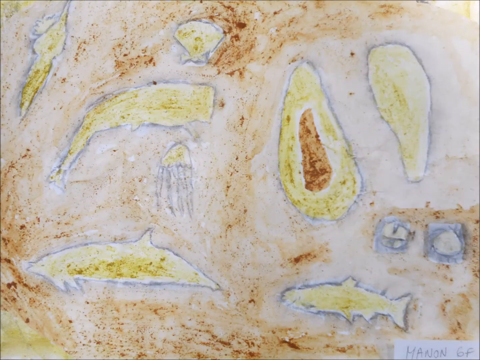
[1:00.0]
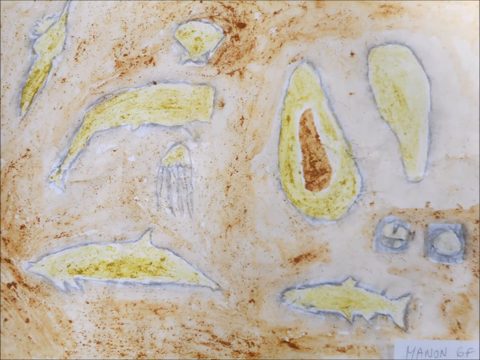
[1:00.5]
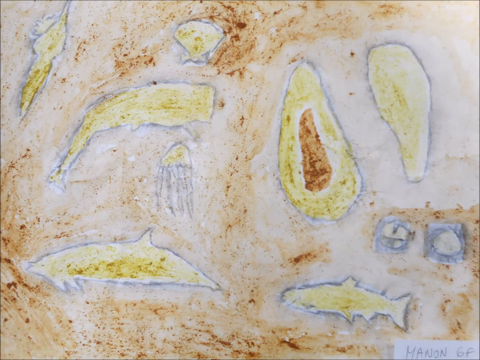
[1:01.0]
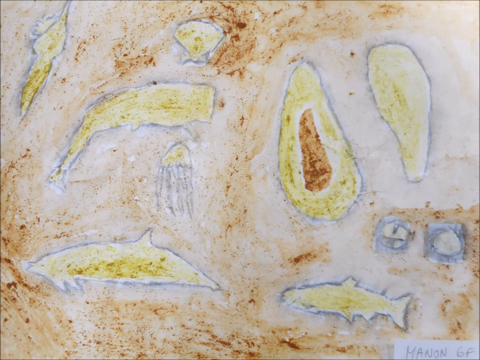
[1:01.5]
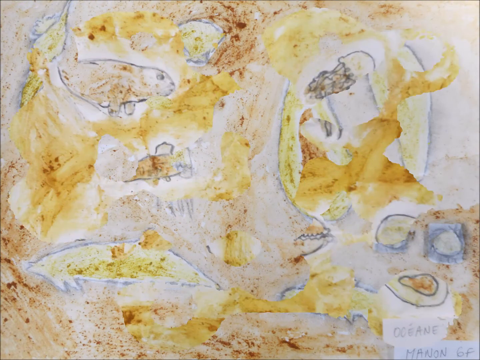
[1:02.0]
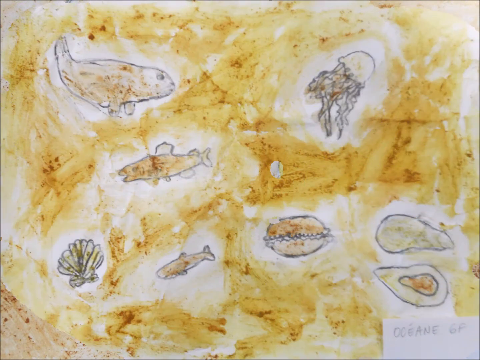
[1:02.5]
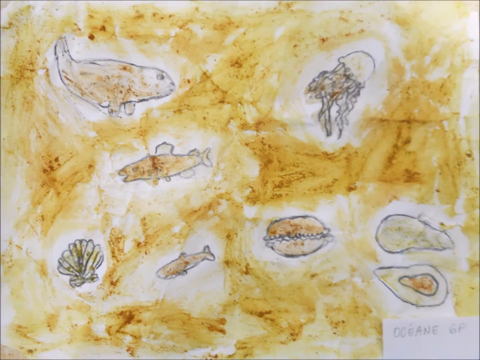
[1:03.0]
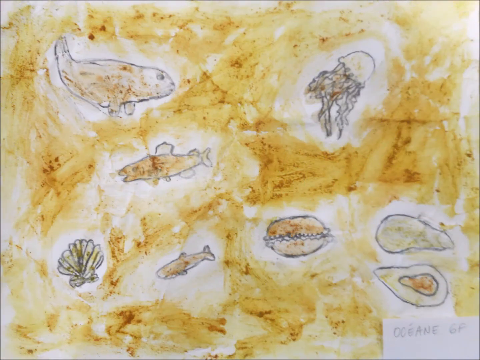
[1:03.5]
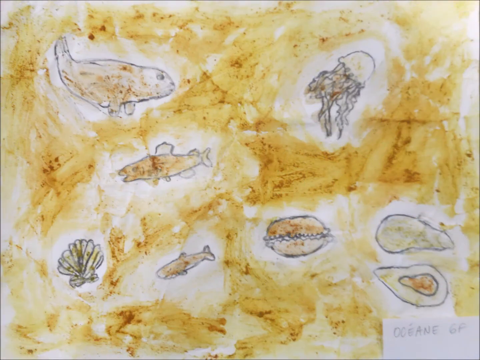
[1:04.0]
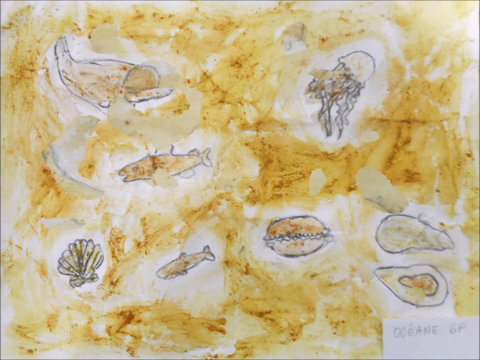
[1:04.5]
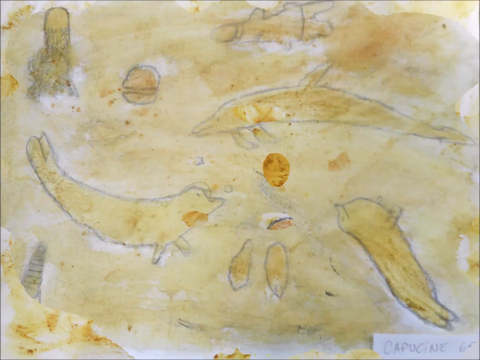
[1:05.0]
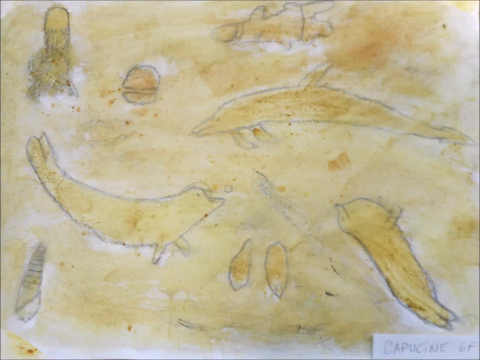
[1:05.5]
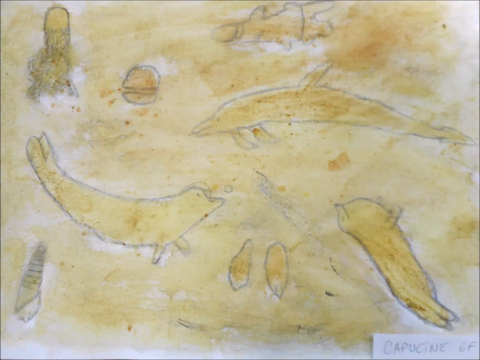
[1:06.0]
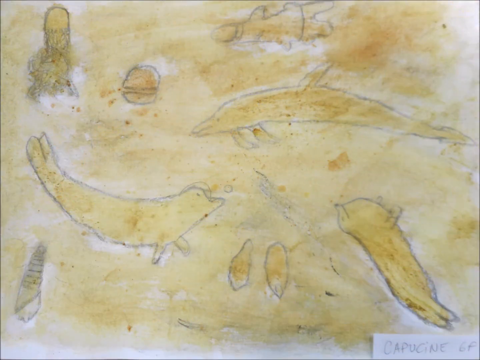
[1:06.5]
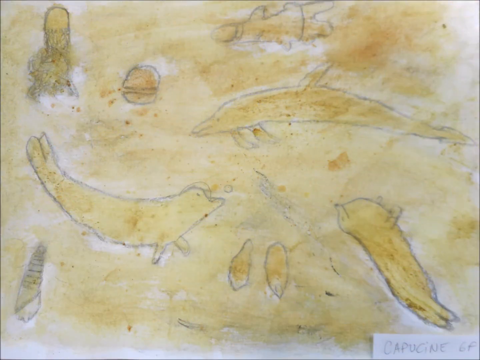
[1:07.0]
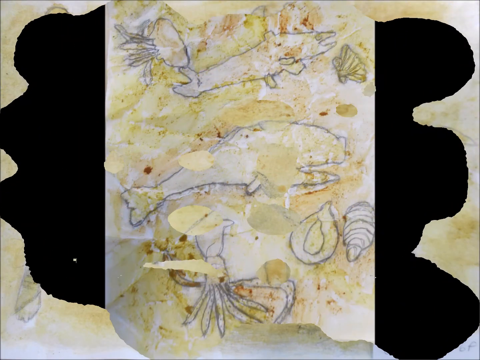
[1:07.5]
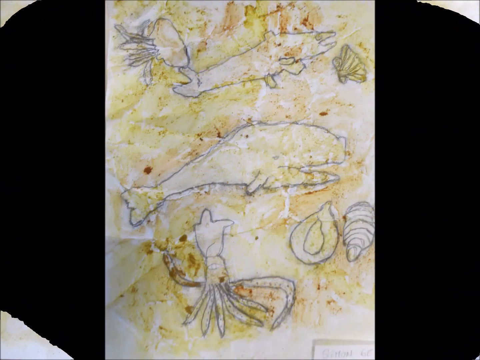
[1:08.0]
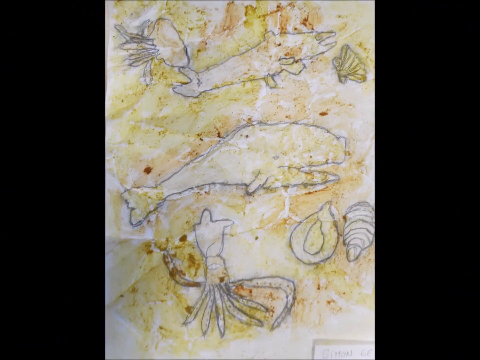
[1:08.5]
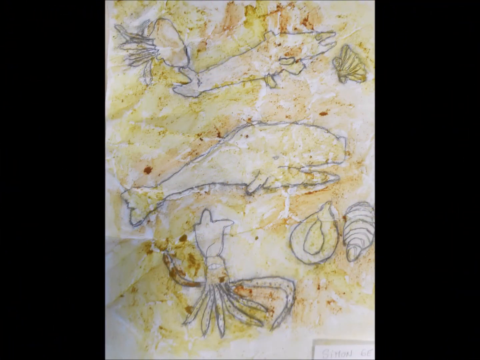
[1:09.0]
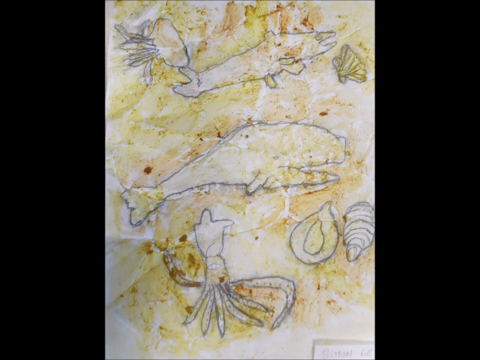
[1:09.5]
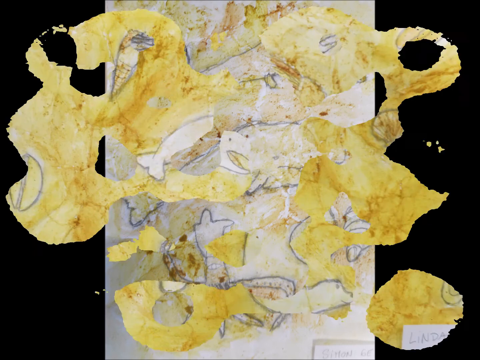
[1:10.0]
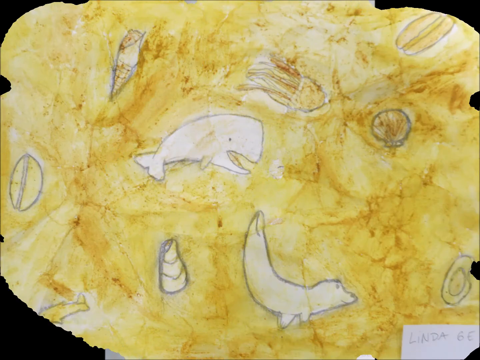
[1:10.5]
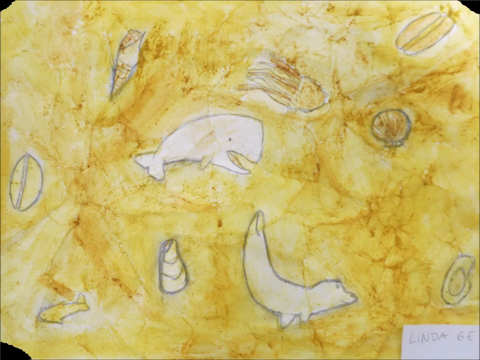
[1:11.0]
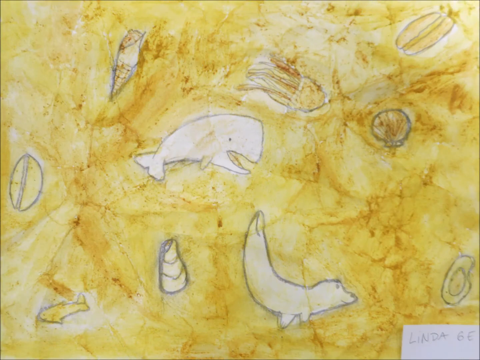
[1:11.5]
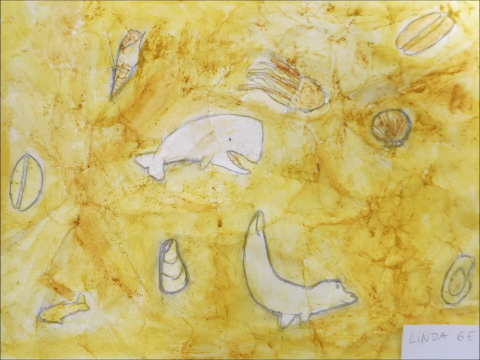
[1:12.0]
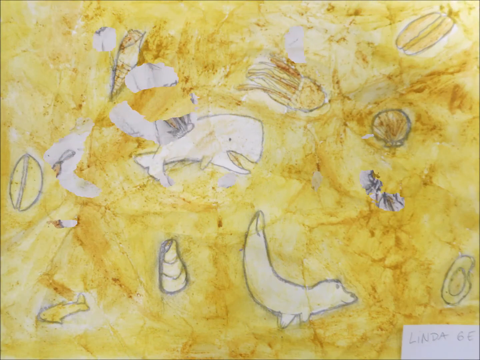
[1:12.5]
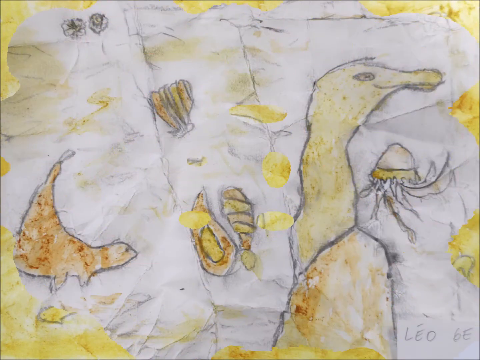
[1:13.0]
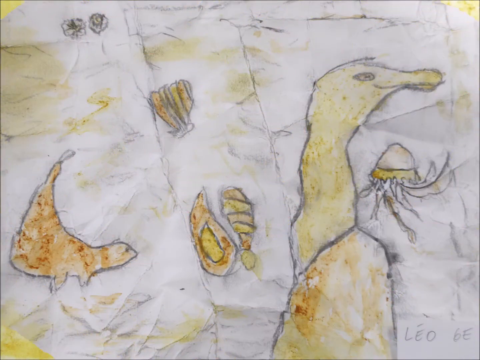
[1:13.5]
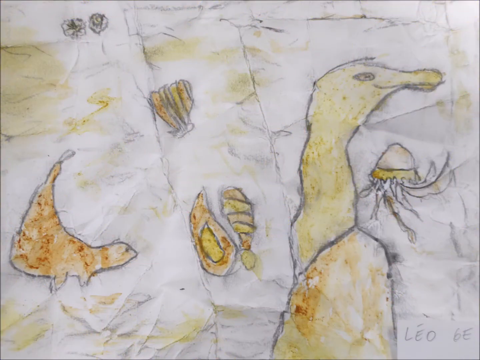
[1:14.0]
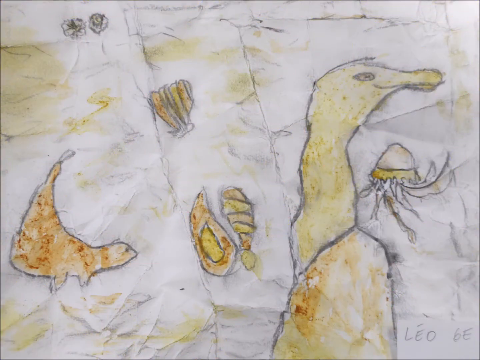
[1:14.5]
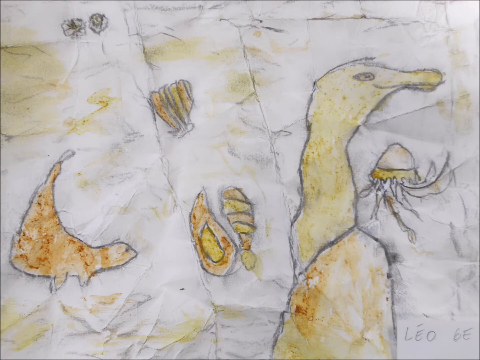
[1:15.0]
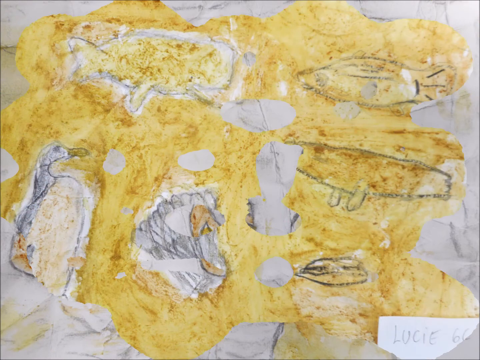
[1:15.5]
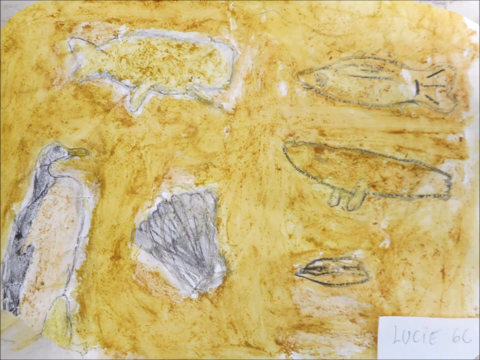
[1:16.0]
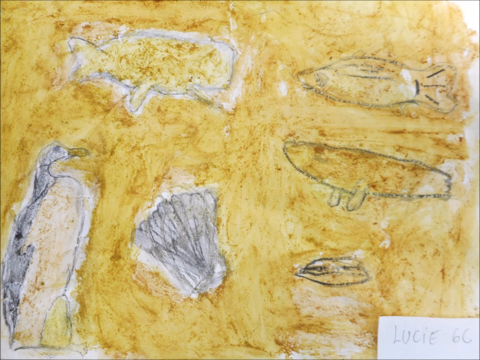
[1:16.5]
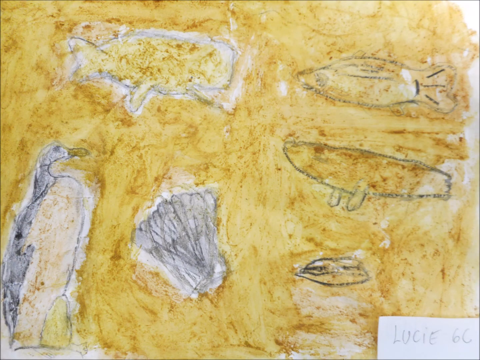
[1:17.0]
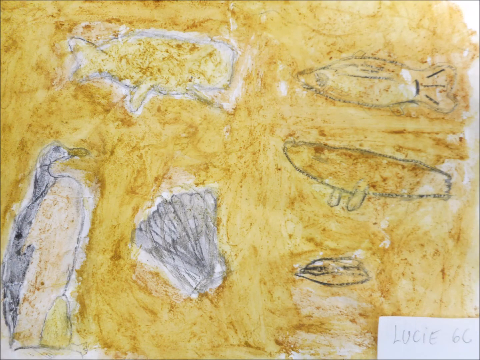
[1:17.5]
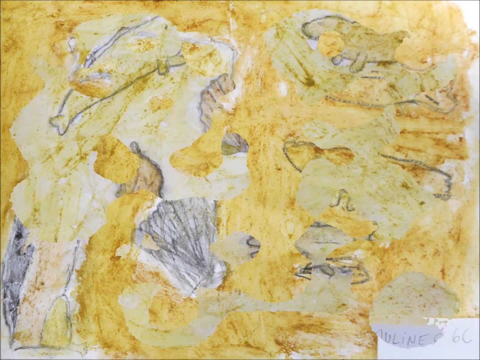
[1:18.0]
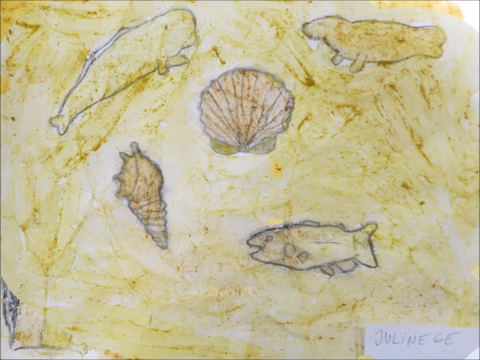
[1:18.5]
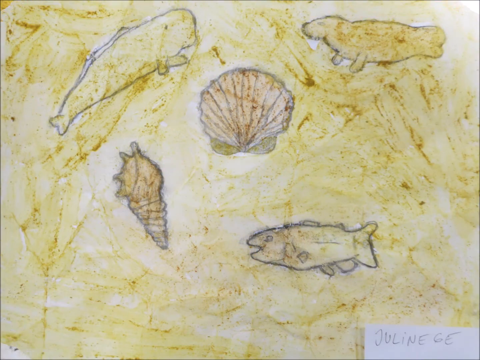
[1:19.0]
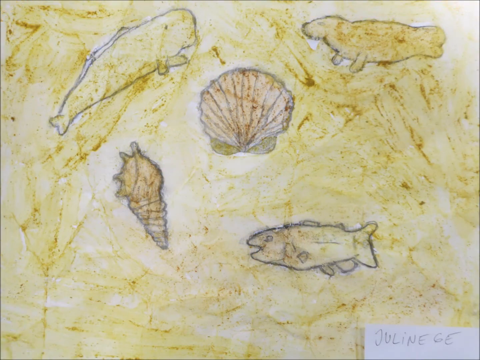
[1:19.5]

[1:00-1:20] Children's drawings of marine life, drawn in pencil and colored in yellow and brown, continue. One shows a whale, a starfish, a squid, an oyster, and different types of fish at the bottom of the ocean. The next shows a shellfish, a shark, a jellyfish, an oyster, and a seal. Another drawing shows a shrimp, a shark, a whale, and different types of fish. Each drawing is signed by the child at the bottom right.